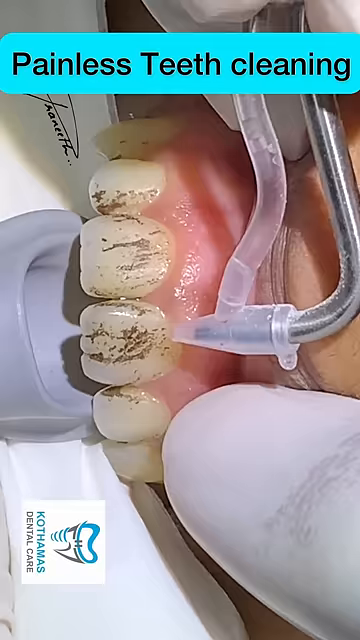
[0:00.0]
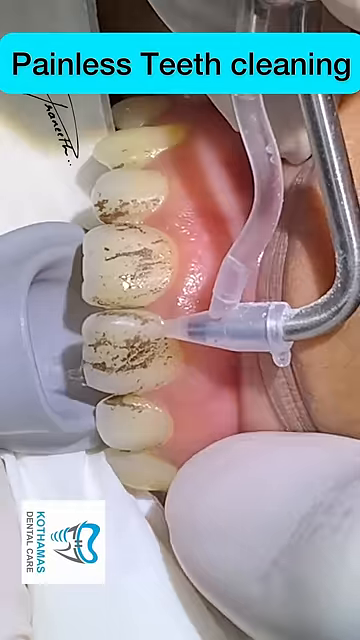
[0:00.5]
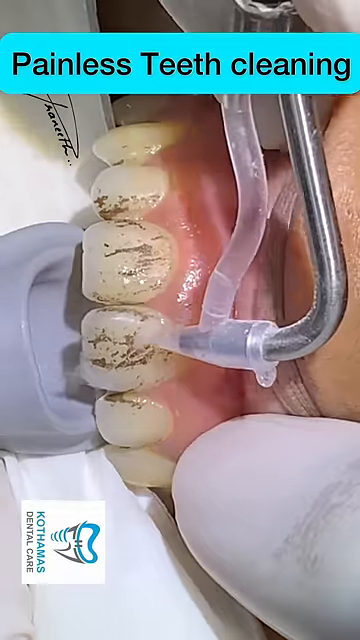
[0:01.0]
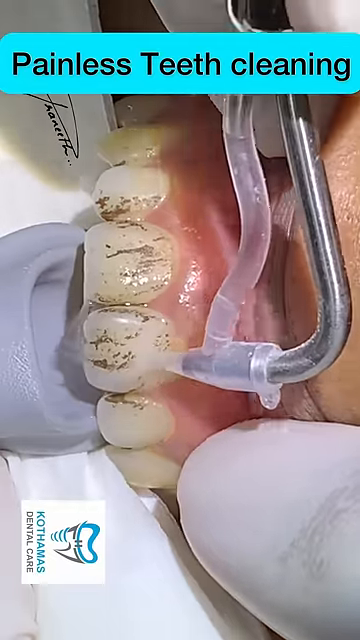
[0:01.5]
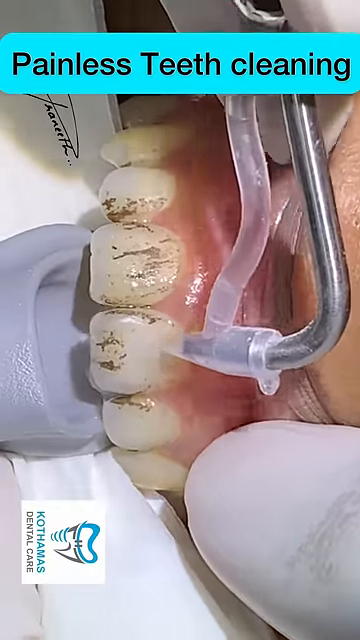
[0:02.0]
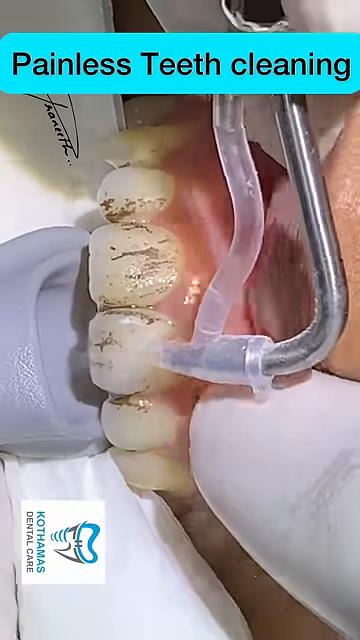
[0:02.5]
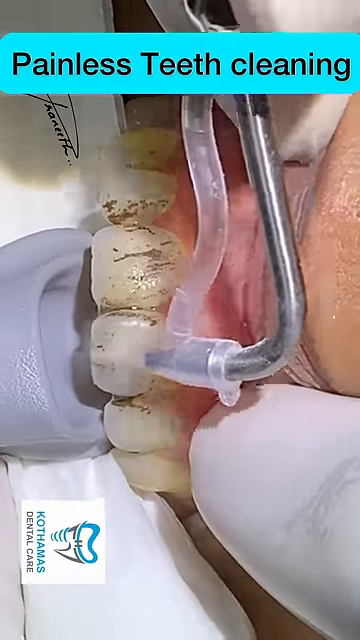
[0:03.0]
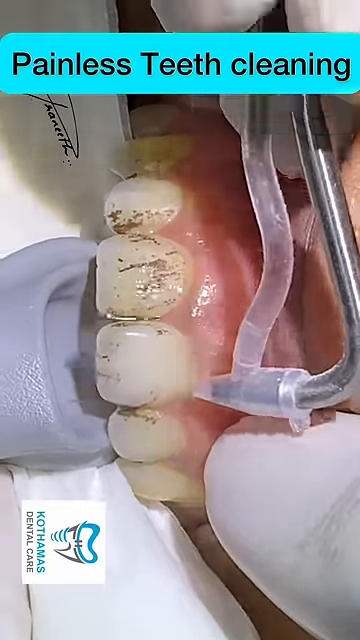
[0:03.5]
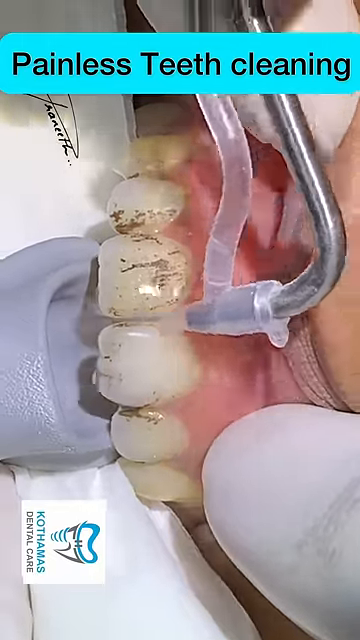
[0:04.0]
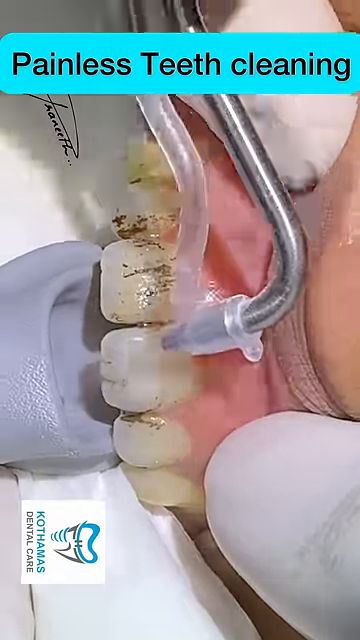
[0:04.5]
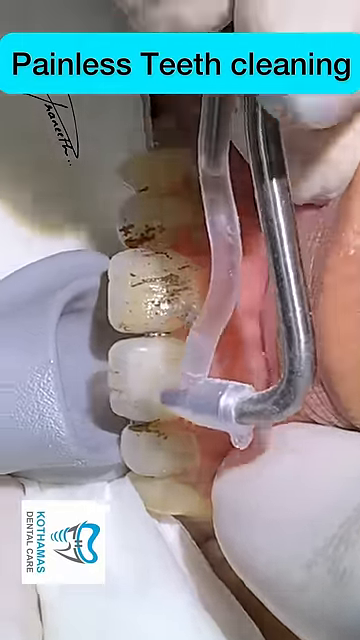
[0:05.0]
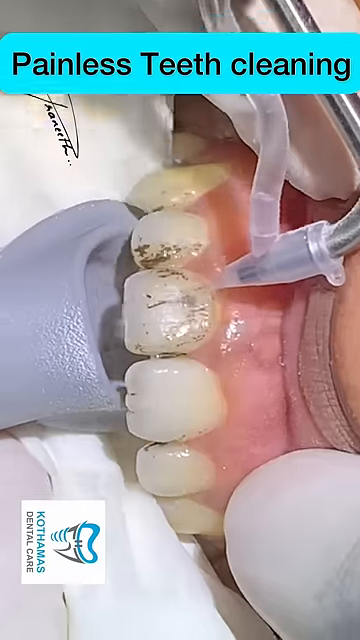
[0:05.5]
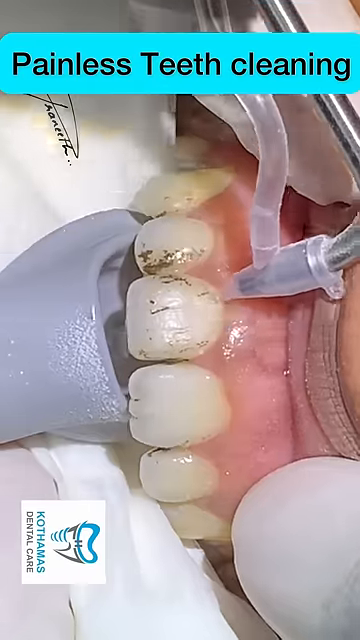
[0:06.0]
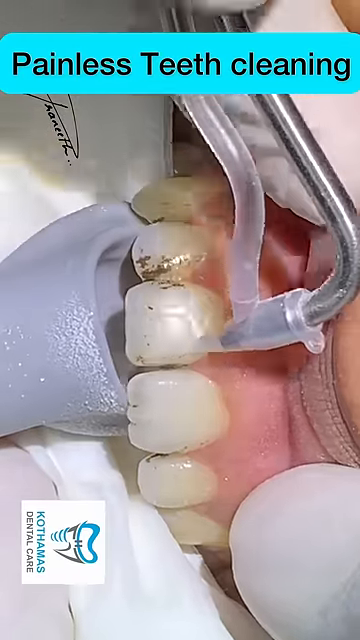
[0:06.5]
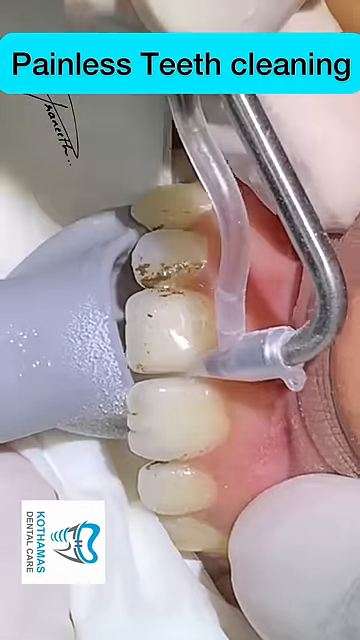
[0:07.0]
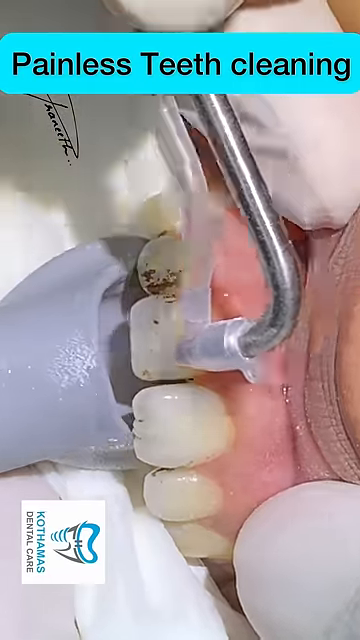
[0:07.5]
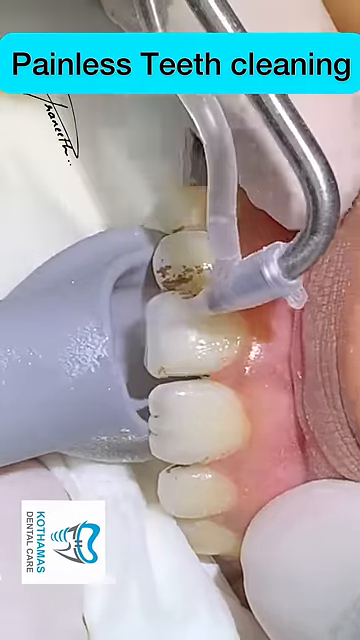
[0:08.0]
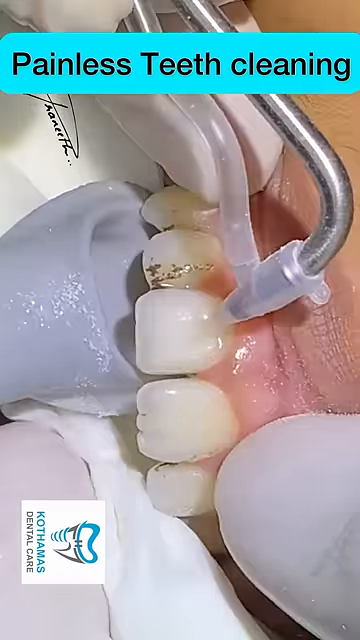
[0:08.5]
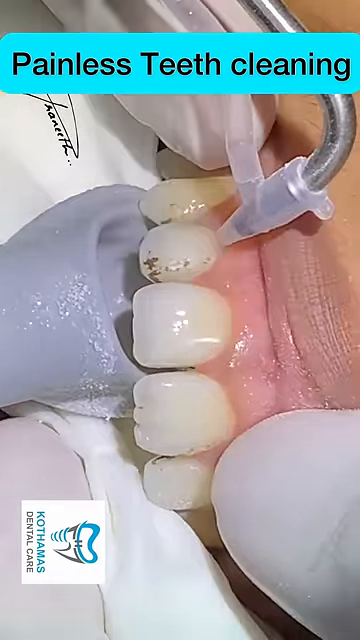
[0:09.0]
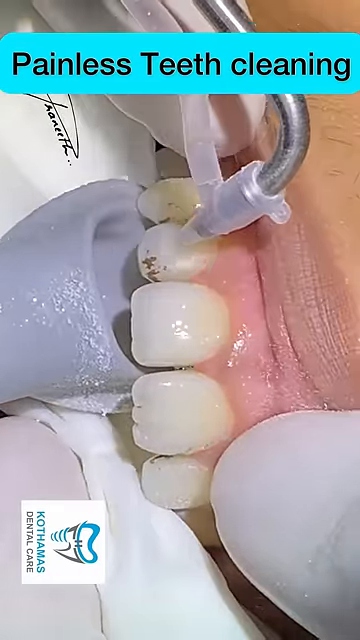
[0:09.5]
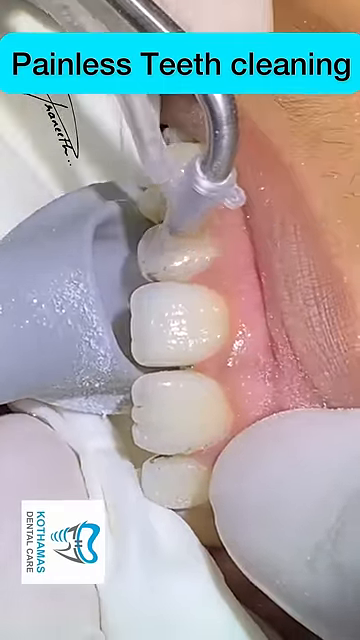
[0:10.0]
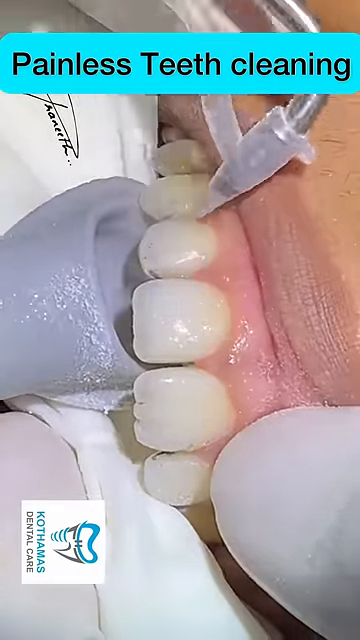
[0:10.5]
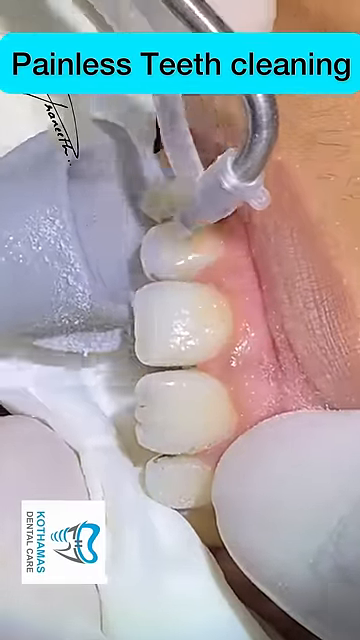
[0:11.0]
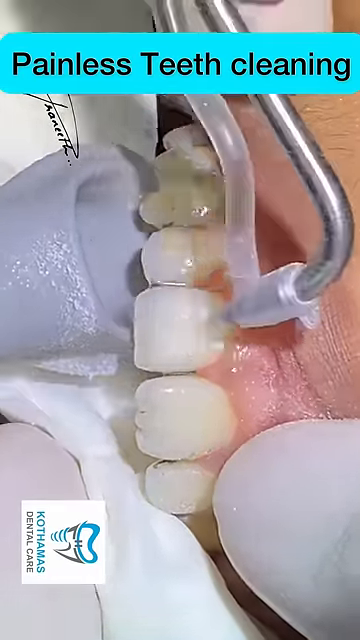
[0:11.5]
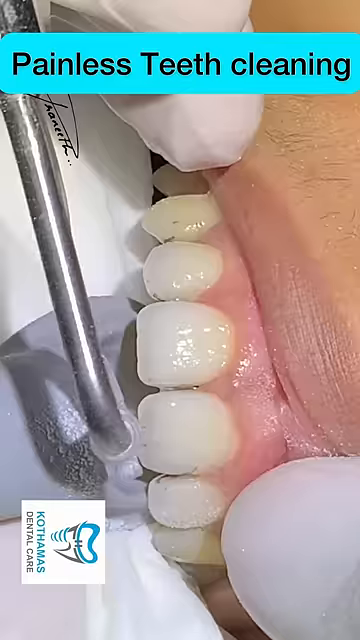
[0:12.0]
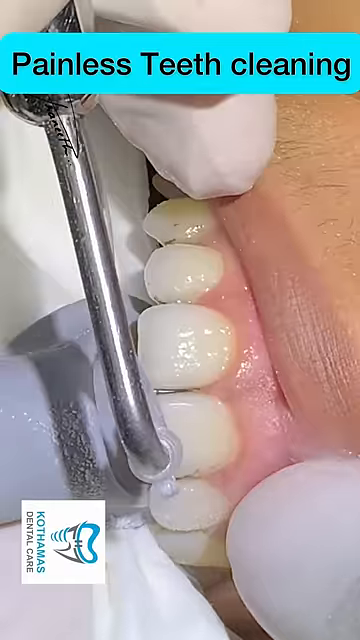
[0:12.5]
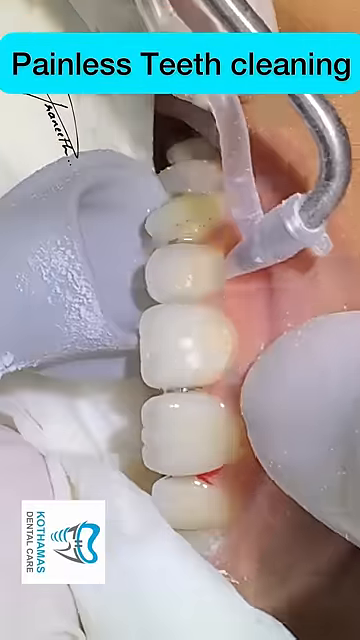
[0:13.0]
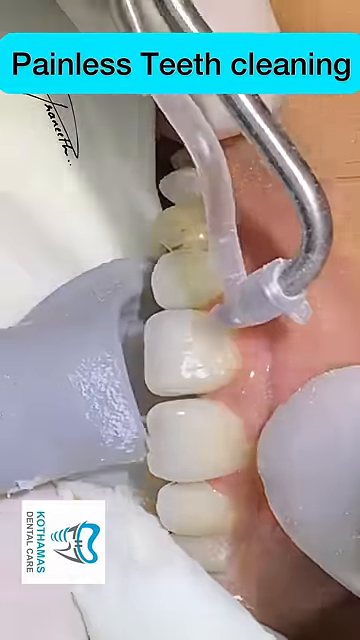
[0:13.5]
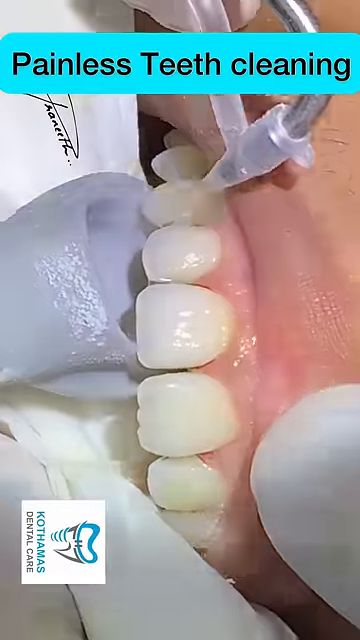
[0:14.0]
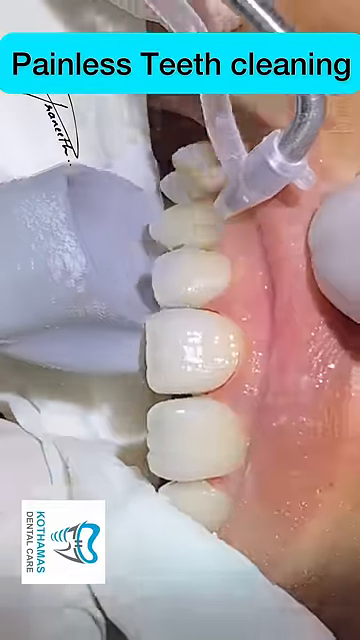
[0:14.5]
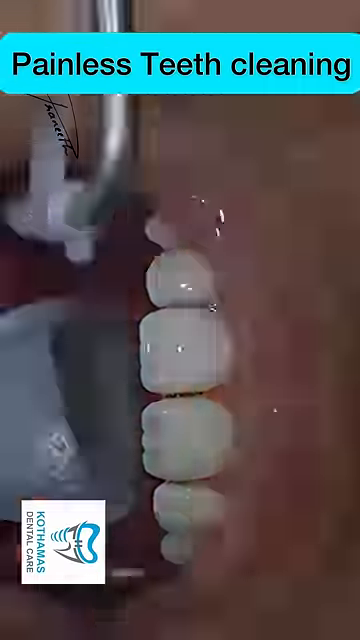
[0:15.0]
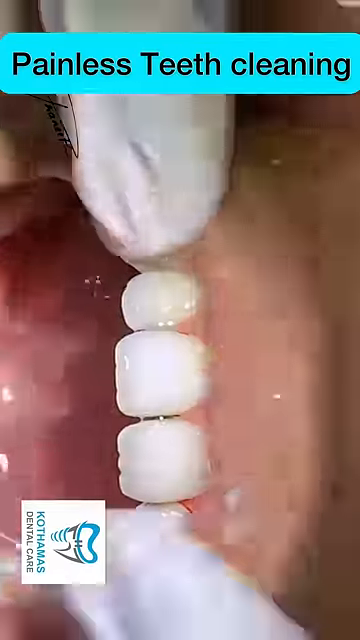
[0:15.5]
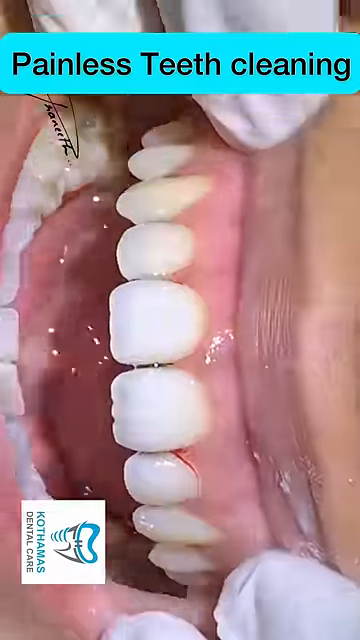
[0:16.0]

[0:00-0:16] The video comes from a dental YouTube channel, seemingly a dental clinic or a dentist promoting his practice or the procedures he does. Text written at the top reads "painless teeth cleaning". Someone appears to be having what would normally be called a scale and polish. Instead of a sharp instrument, the dentist uses some sort of water jet, a very high-pressured jet like a little miniature hose, which cleans the person's teeth until they are very clean and very white. This is probably a new, less painful form of dentistry.